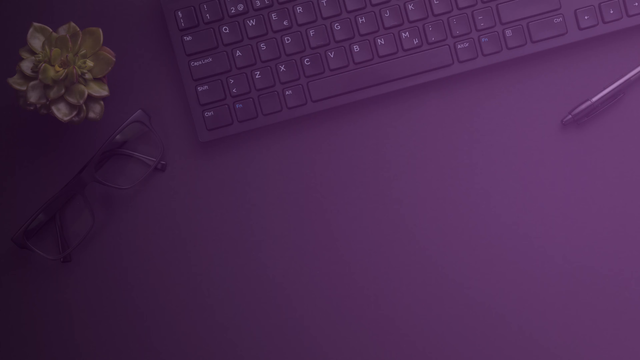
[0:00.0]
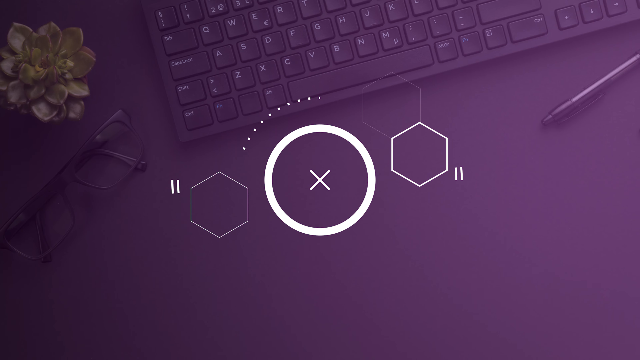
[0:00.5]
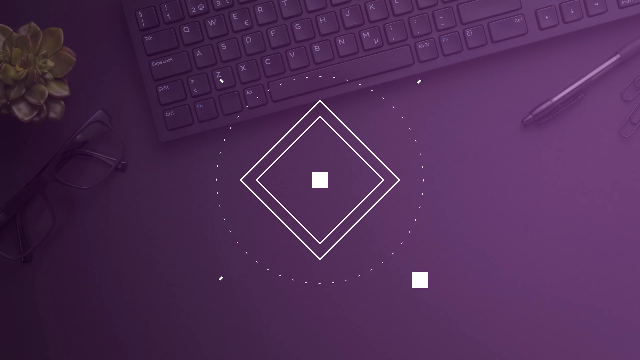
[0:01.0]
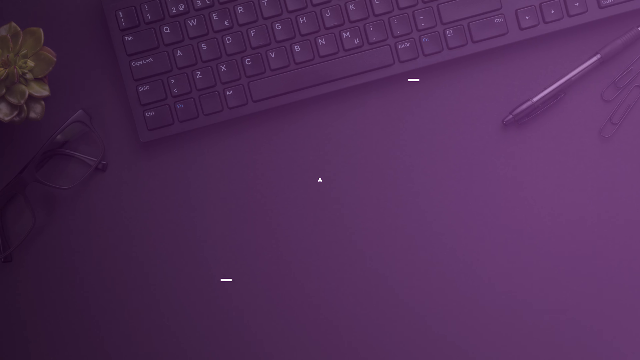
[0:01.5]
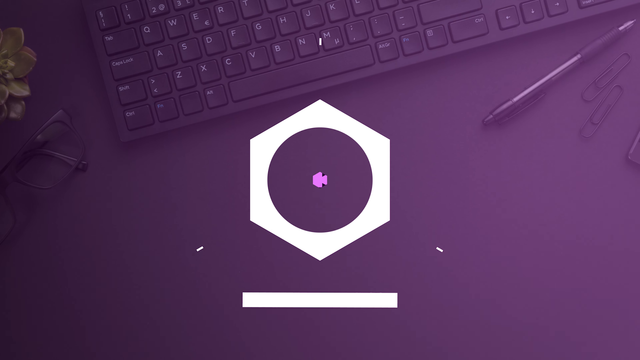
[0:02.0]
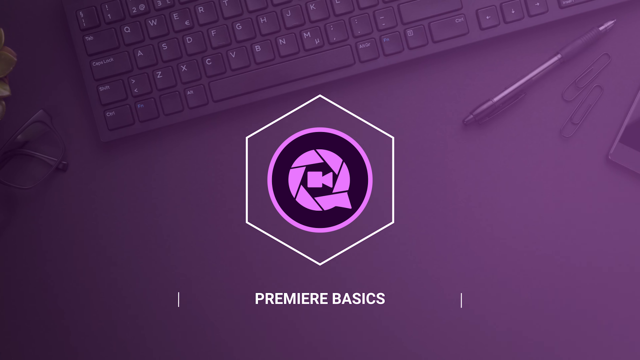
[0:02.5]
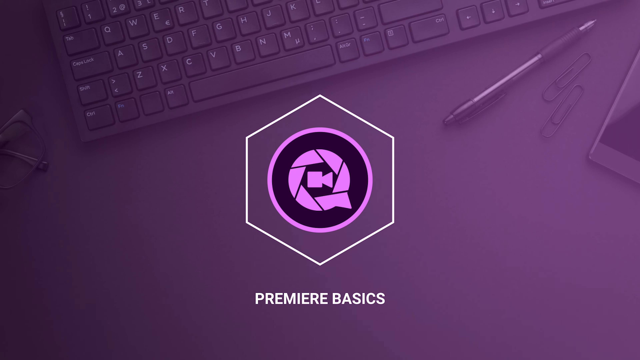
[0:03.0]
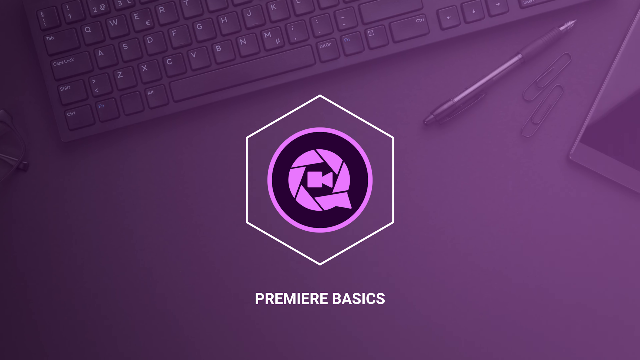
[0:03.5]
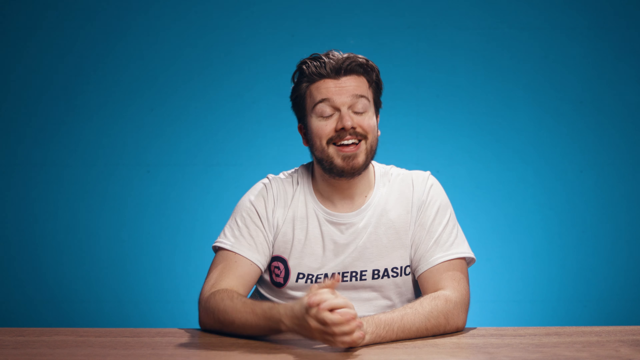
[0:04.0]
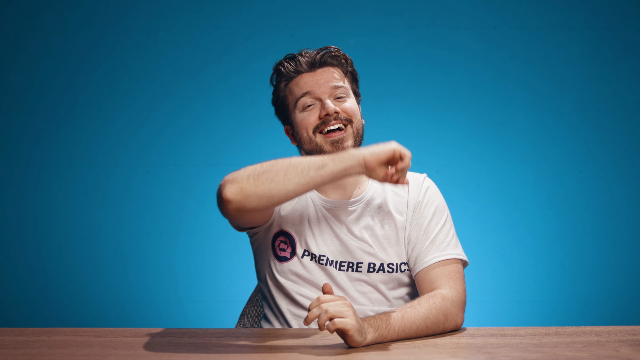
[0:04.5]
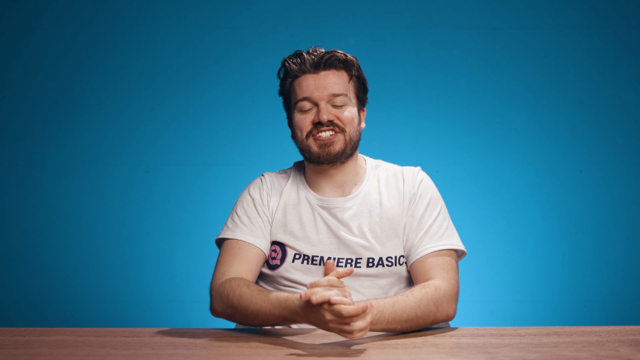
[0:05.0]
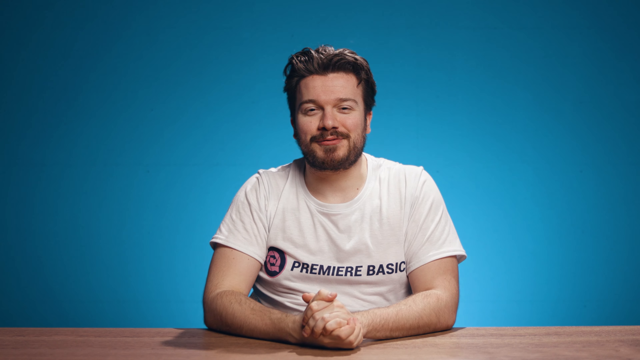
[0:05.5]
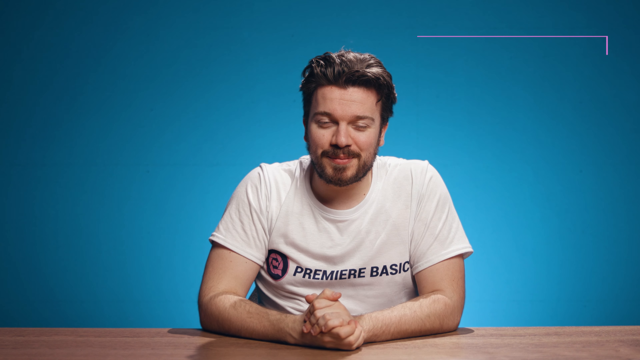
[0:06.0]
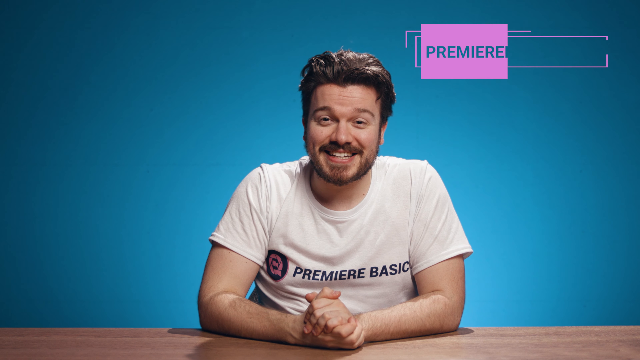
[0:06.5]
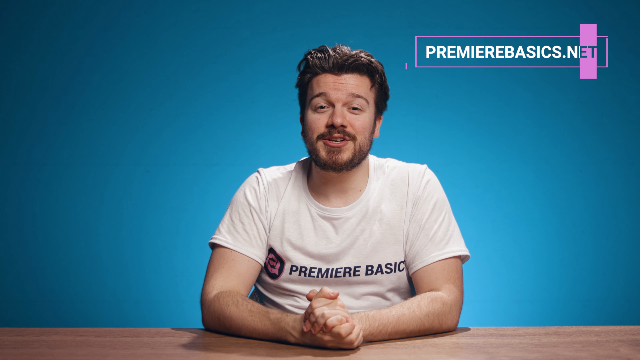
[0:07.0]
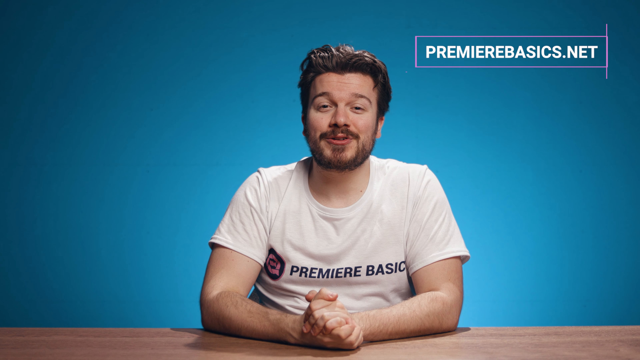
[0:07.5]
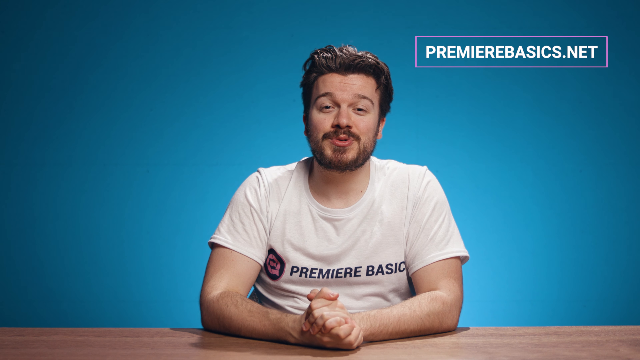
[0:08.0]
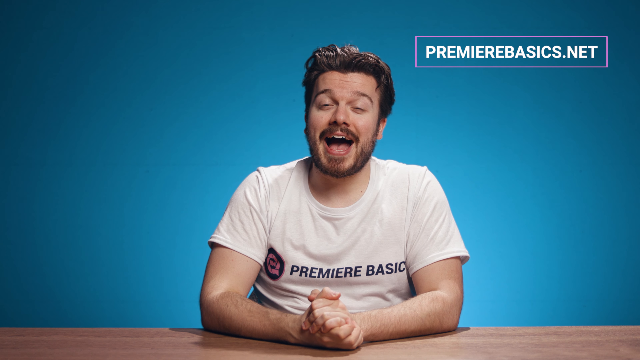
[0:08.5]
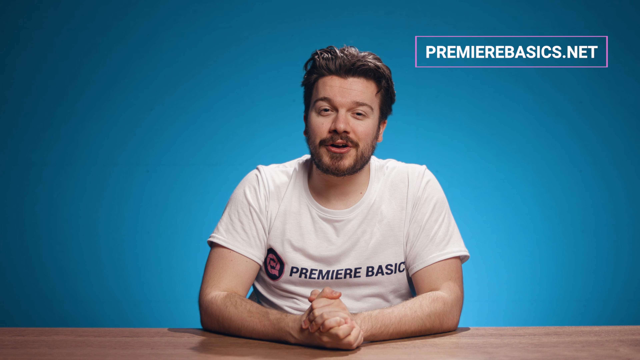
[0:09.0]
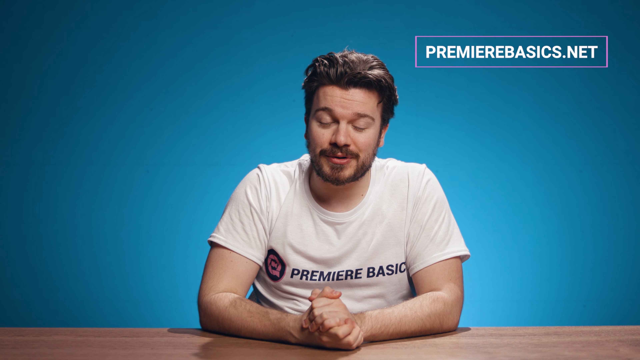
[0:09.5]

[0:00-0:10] The video appears to open on an interview. A man is sitting on a chair with his hands leaning on the table against a blue background; he wears a white t-shirt with "Premiere basics" written on it and speaks using body language. One shot shows a keyboard, a pen and a flower on what seems to be someone's office table, with a purple background. The presenter, a man, lifts up his hands and closes them, which seems to be a gesture welcoming people to the show. He is smiling and energetic.